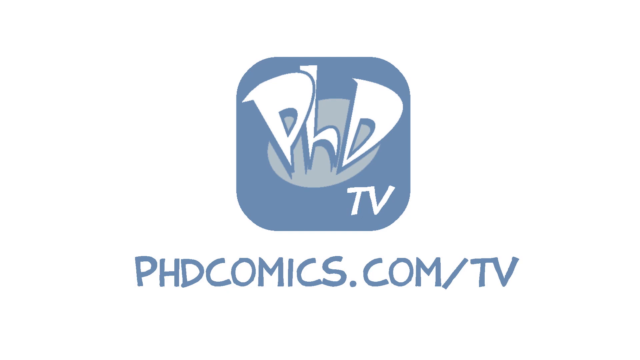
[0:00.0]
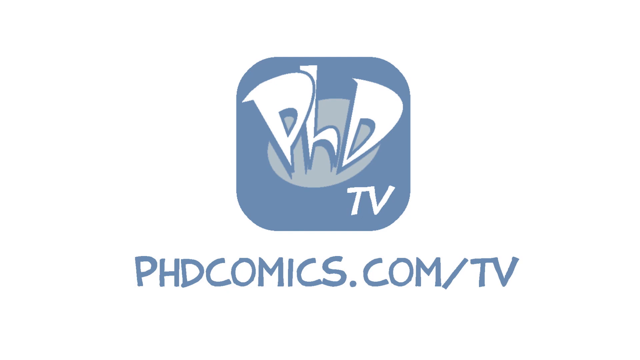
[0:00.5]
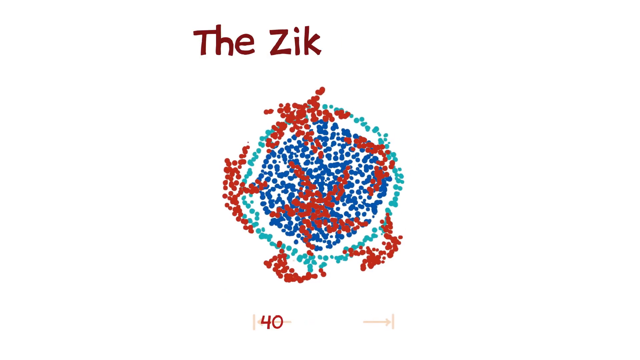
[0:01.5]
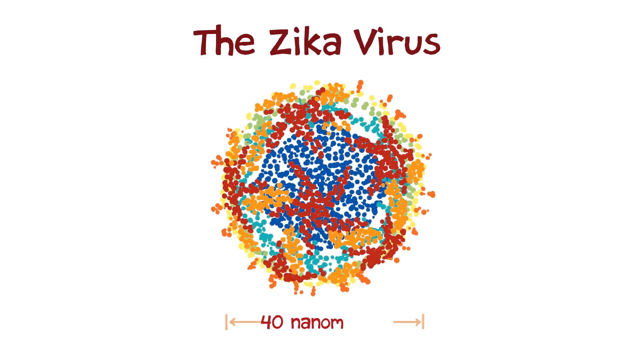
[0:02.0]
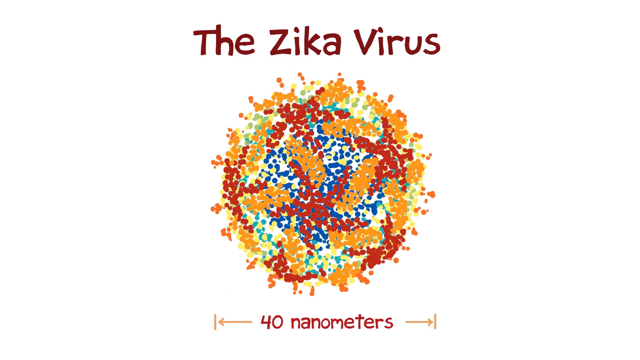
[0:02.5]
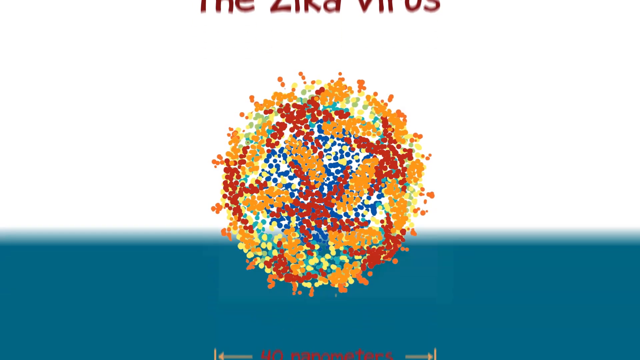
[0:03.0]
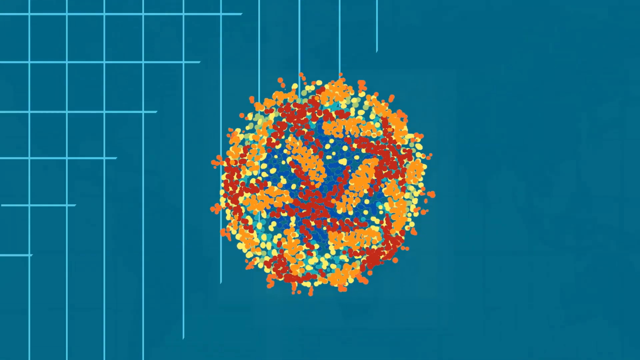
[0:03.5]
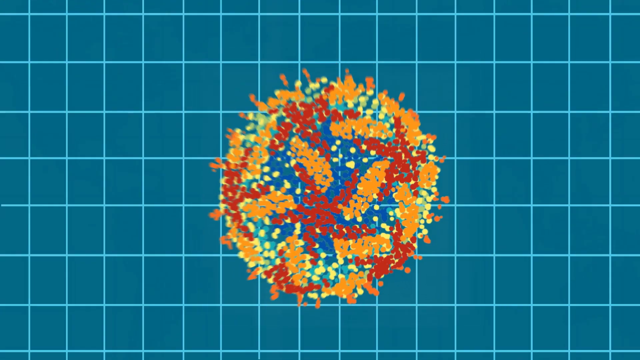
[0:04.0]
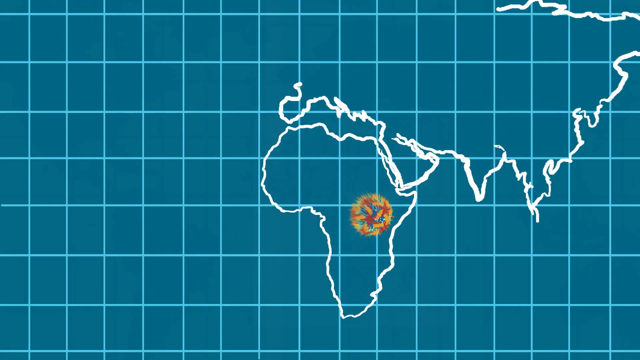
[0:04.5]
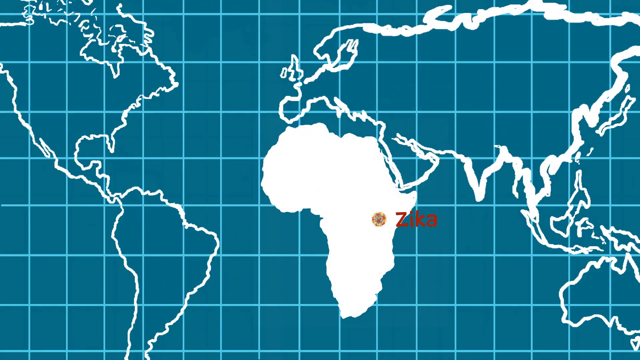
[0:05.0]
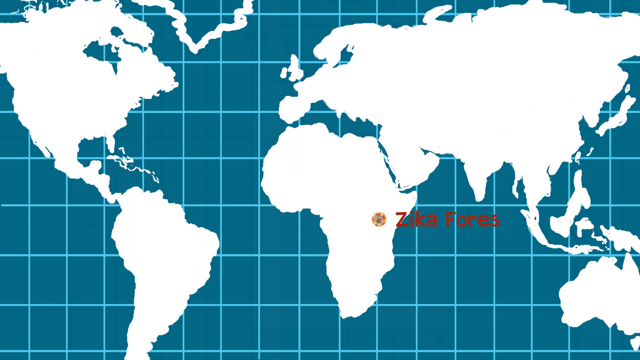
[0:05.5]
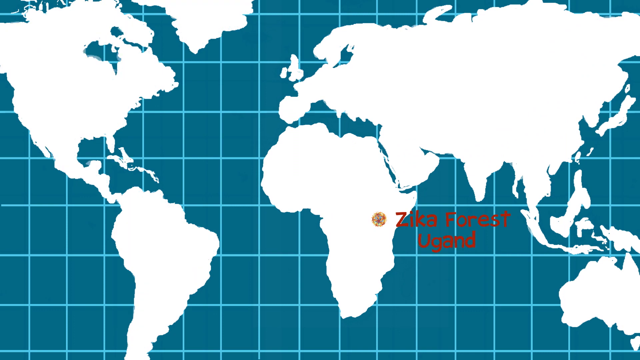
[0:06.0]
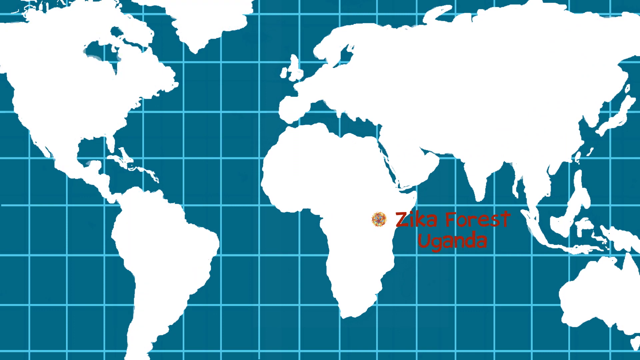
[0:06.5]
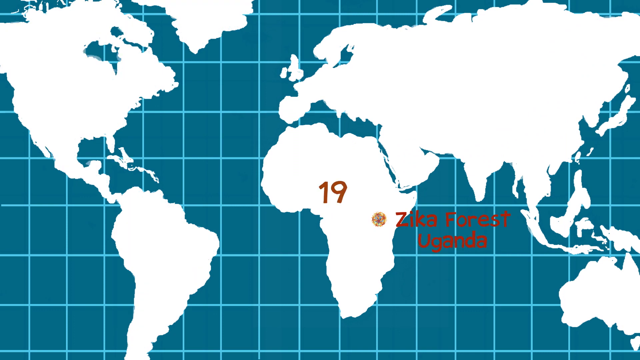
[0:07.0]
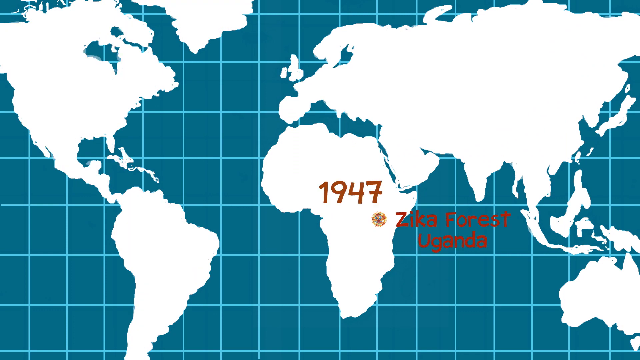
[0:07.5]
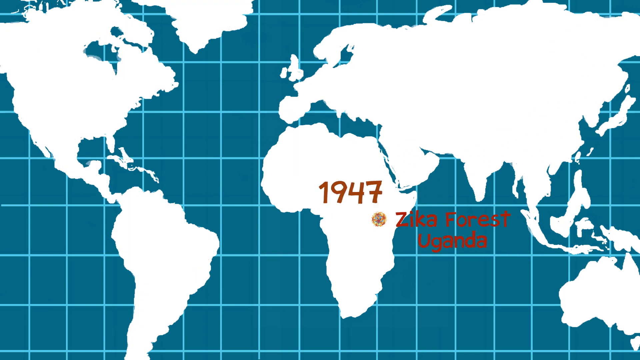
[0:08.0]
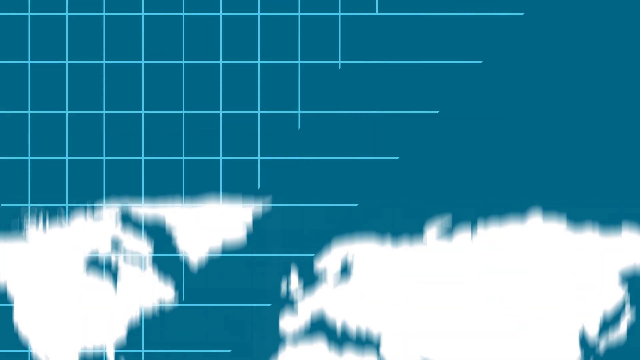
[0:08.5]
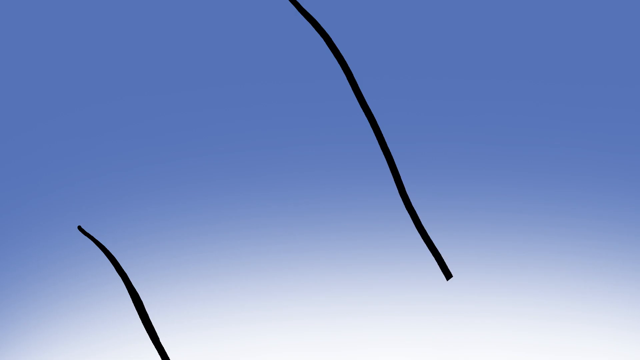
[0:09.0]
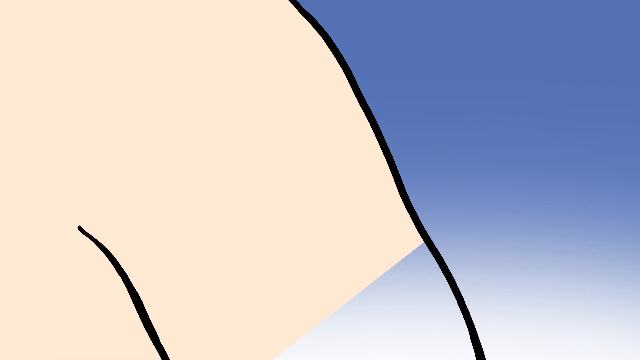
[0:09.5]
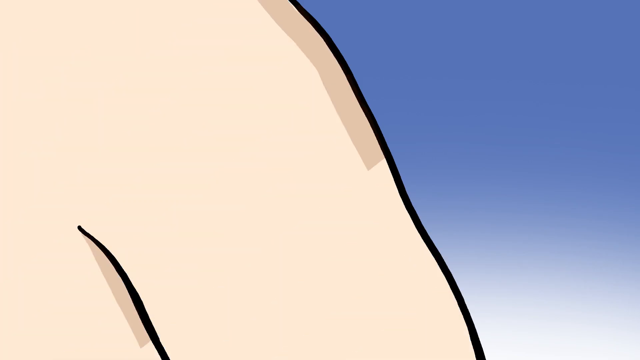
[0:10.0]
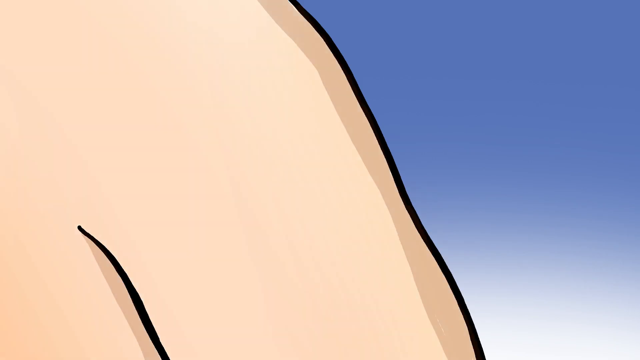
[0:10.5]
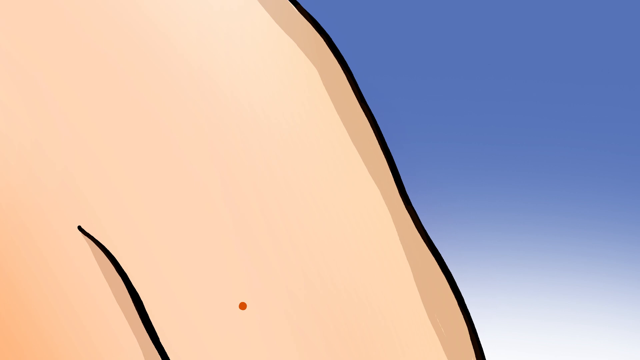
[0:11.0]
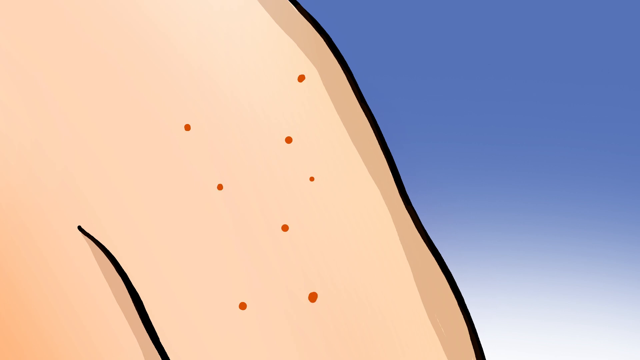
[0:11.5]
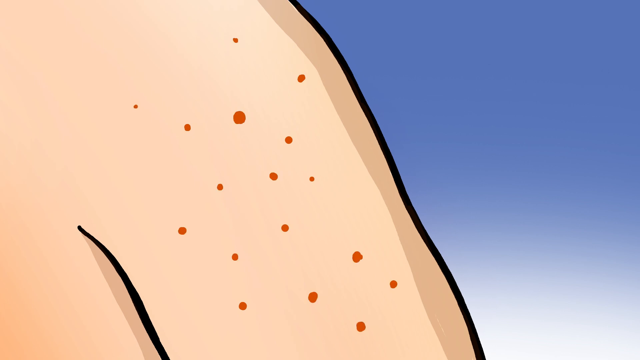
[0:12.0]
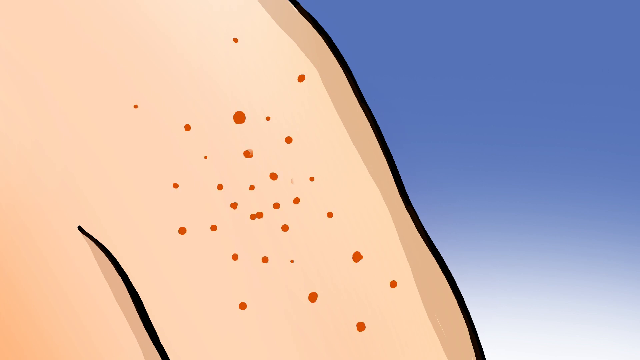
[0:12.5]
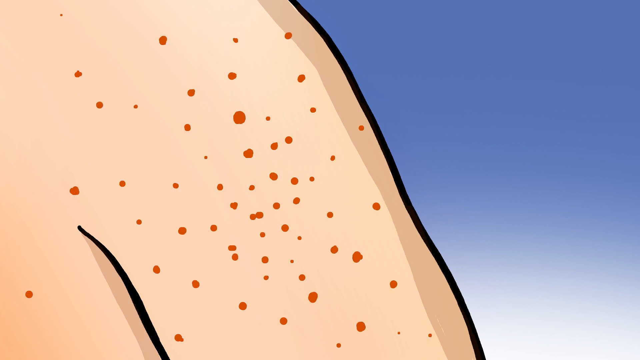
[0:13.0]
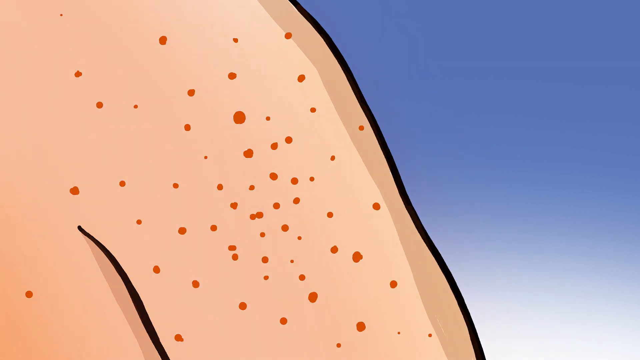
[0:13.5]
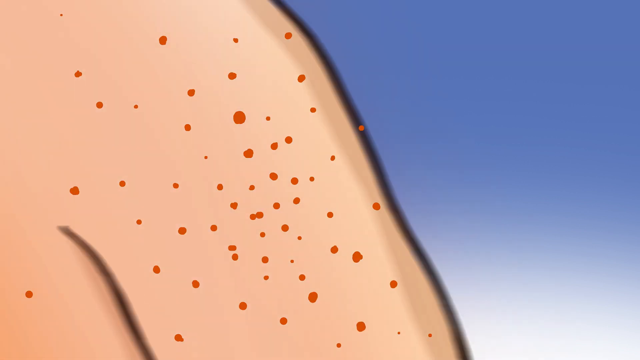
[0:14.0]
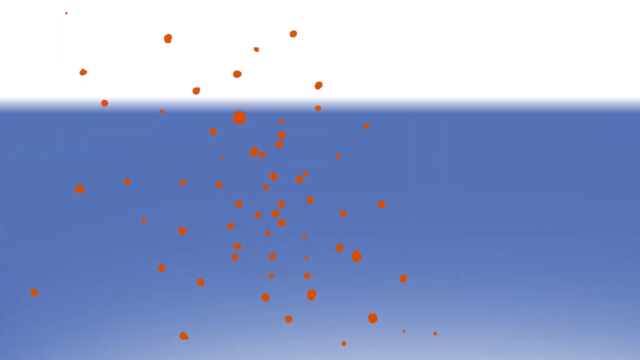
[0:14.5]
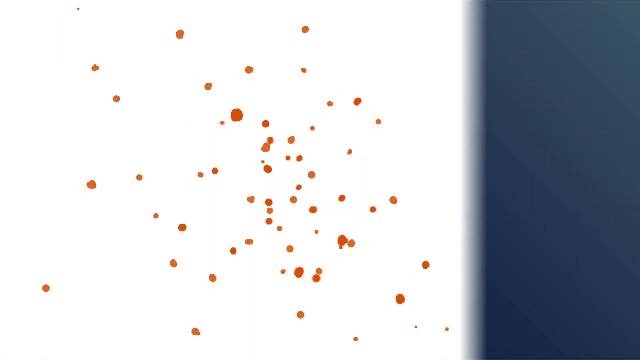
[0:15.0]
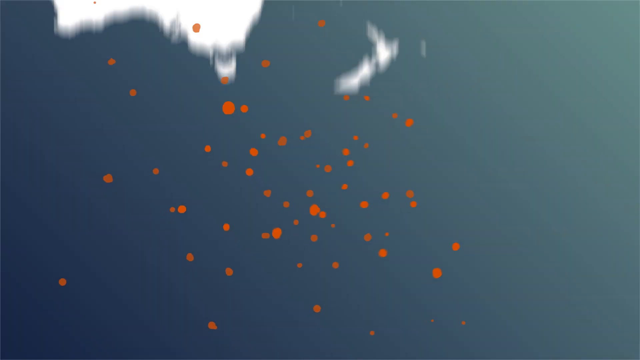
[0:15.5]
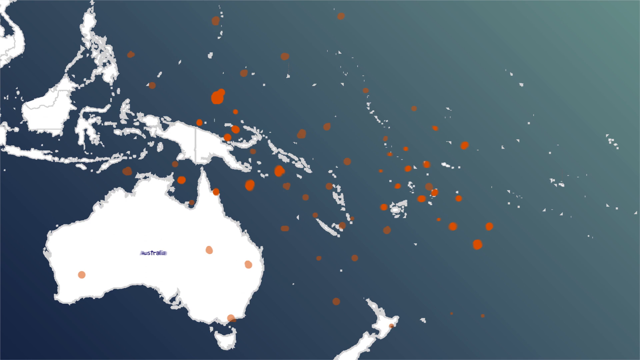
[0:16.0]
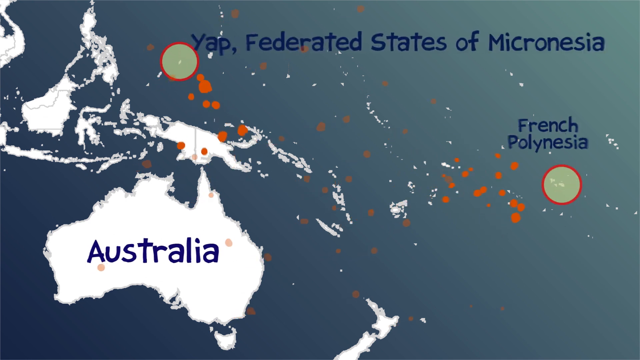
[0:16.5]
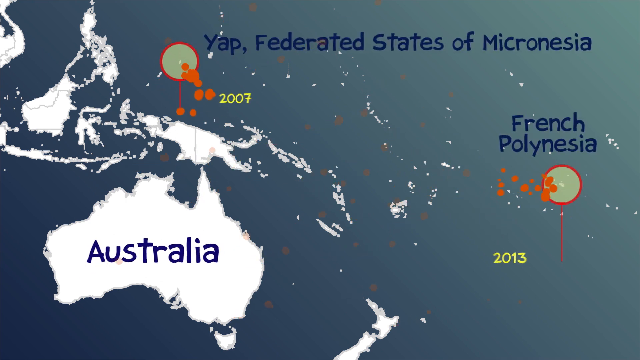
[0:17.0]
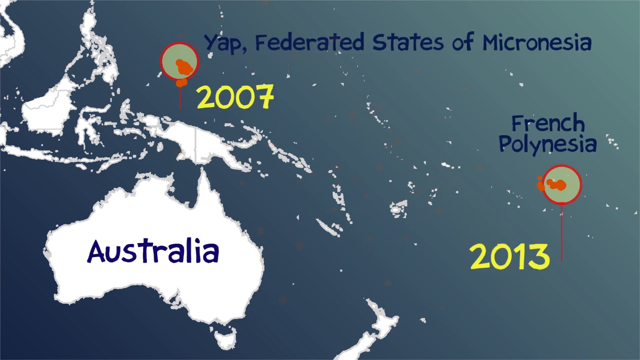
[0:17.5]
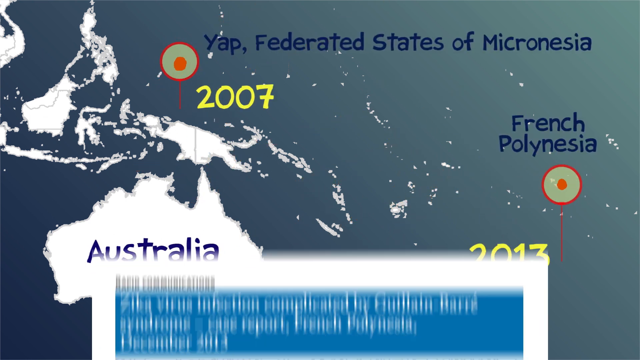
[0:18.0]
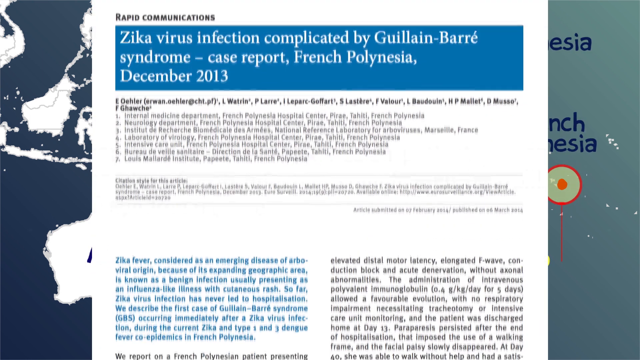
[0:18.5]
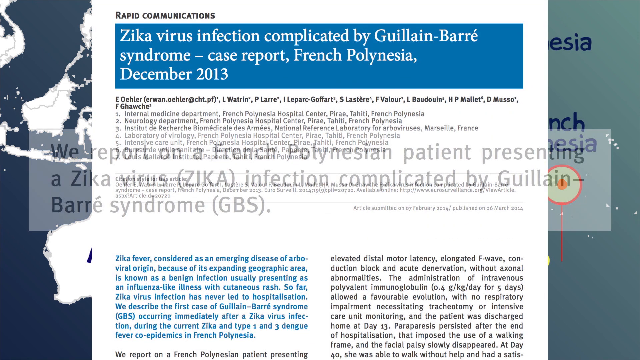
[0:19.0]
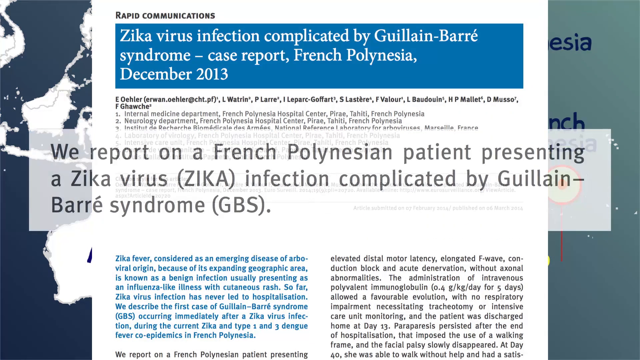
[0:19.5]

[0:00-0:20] The video opens on a static, predominantly white image with a blue logo and blue writing. The square blue logo in the centre has cartoon-style lettering reading "PhD TV" with a grey skewed oval behind it in the centre; beneath the square, capital lettering reads "phdcomics.com.tv". A cut leads to a new white screen where colours begin to form in the centre as small dots, quickly building a circular image that is blue in the centre with a teal outer ring and red starfish-style designs on top, all made of individual dots. Dark red text is written out letter by letter along the top of the screen: "The Zika virus". More colours are added to the central image as little dots forming patches, with yellows and oranges creating little orange sausage-shaped images. At the bottom, red text reads "40 nanometres", with arrows pointing left and right on either side to little vertical lines that match the width of the circular object. The top text disappears up out of the shot, the bottom text disappears down off the screen, and a blue wipe moves up from the bottom behind the circular image. The circle expands slightly, then contracts down towards the middle bottom of the shot as a grid forms behind it along with a map of the world drawn in white, the virus shrinking down onto Africa. Red text appears next to it letter by letter: "Zika Forest, Uganda". A date appears on top of Africa, number by number in red: "1947". The map then disappears down off the bottom of the screen as the grid is undrawn, its lines retracting left and up. The dark teal background changes to a purple gradient, darker at the top and becoming almost white at the bottom right. Lines are drawn that resemble a shoulder and a left arm seen front on. A flesh tone is painted from the top left corner down to the bottom to fill in the arm, with shading lines on the right of the arm and under the armpit. Brown/orange dots appear on the arm and into the shoulder; the arm and shoulder are pulled off to the left, leaving the dots behind, and the purply blue background is pulled down off the screen to leave white. A wipe of colour comes in from the right, creating a dark bluey green background that is lighter green in the top right corner. The remaining dots move around as a white map of part of the world drops down from above. Australia is in the bottom left, labelled "Australia" in blue. At the top right is "Yap, federated states of Micronesia" with a light green circle ringed by a thick red circle, and below it to the right blue writing reads "French Polynesia" with a similar circle beneath. The clusters of orange dots move into these circles, and yellow dates appear beside them: "2007" for Yap and "2013" for French Polynesia. A white box is lifted from the bottom of the screen to the top to fill the centre, with the map still visible on the left and right. It appears to be a document titled "Rapid Communications", with a blue horizontal bar containing white text reading "Zika virus infection complicated by Guillain-Barre syndrome, a case report, French Polynesia, December 2013", and text beneath. Another horizontal white box fades in on top with black writing: "We report on a French Polynesian patient presenting a Zika virus (ZIKAZ) infection complicated by Guillain-Barre syndrome (GBS)."